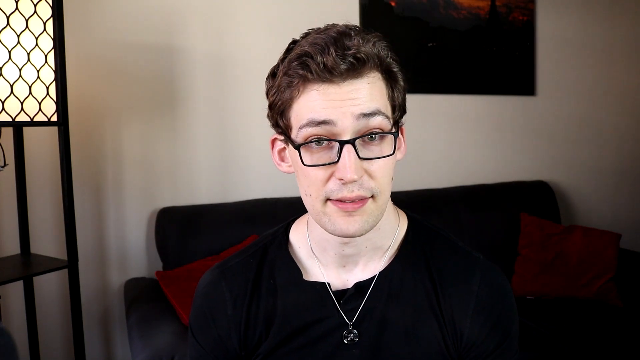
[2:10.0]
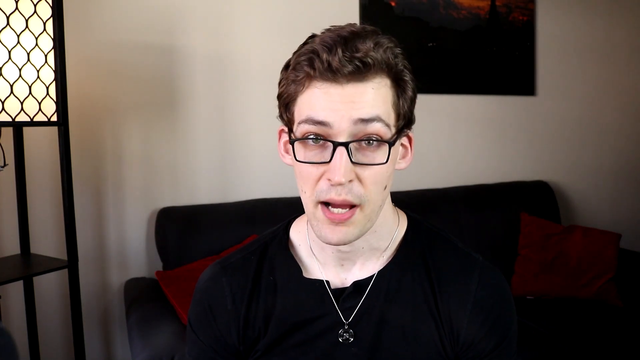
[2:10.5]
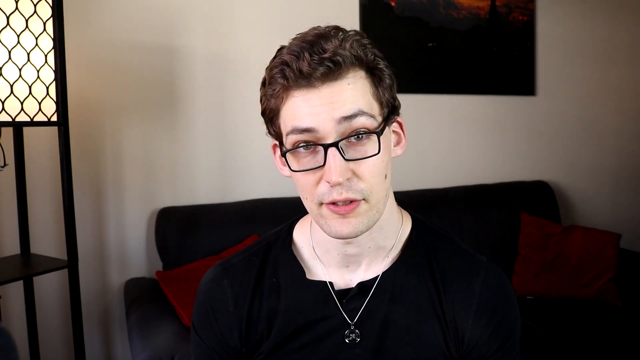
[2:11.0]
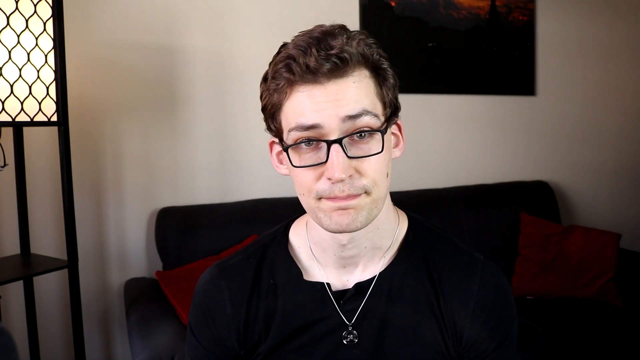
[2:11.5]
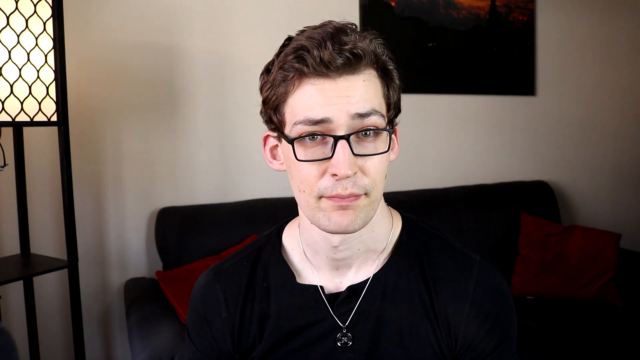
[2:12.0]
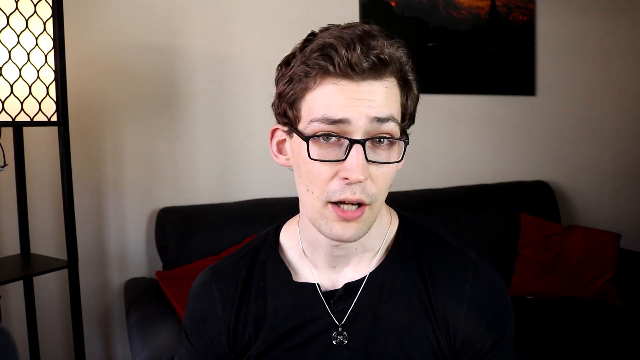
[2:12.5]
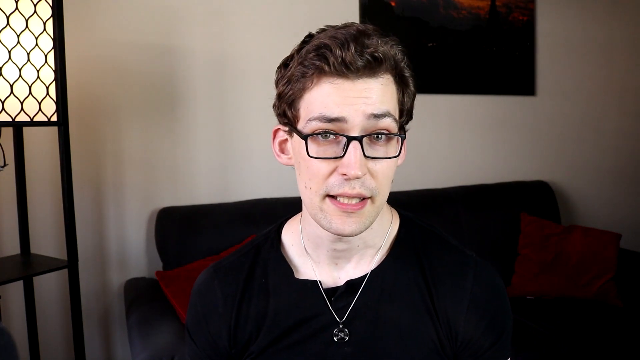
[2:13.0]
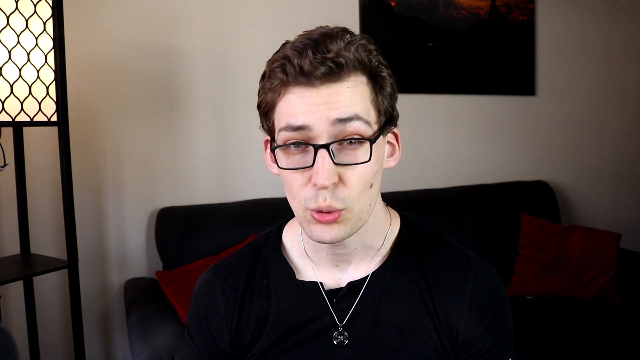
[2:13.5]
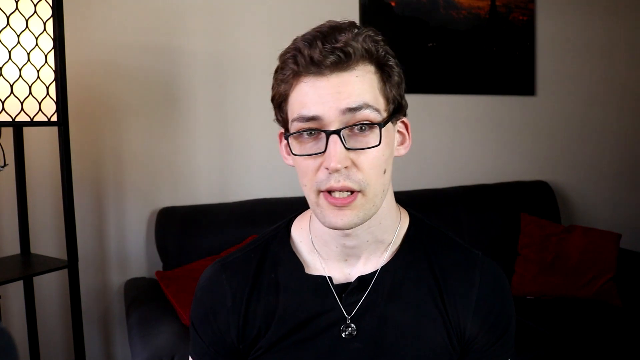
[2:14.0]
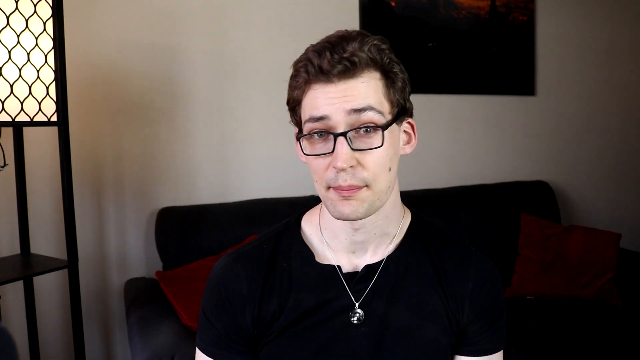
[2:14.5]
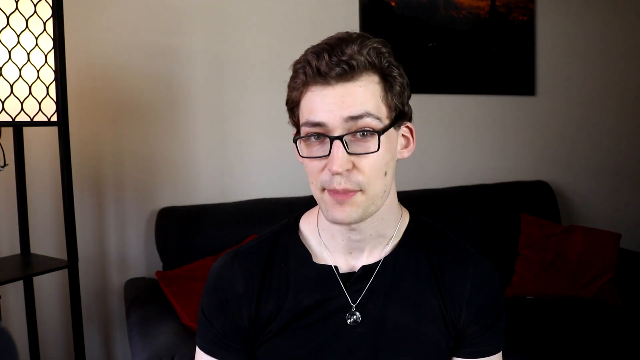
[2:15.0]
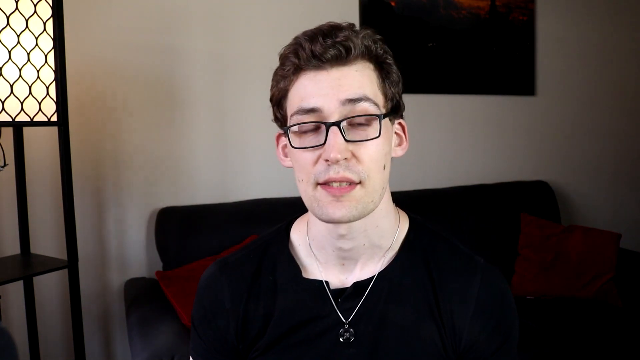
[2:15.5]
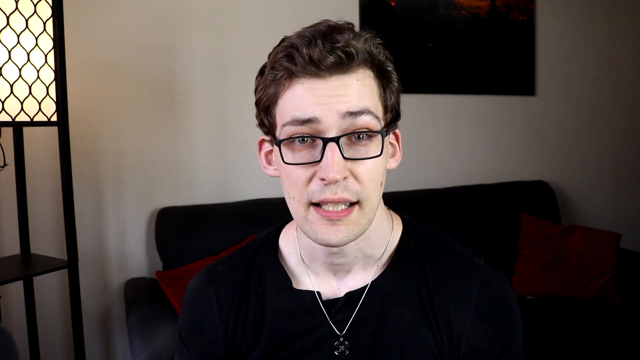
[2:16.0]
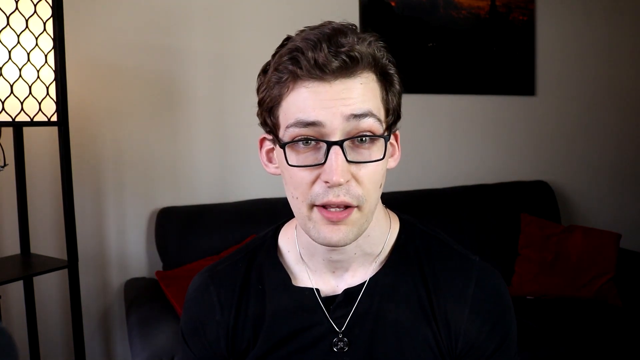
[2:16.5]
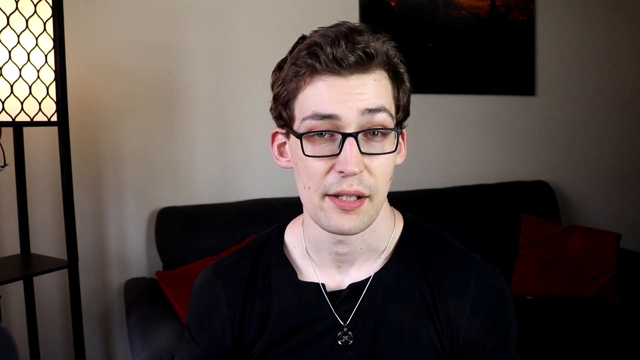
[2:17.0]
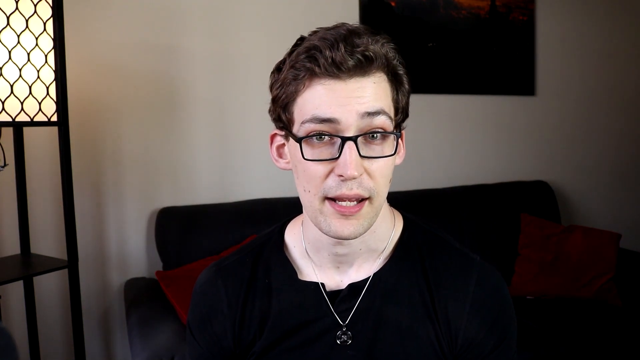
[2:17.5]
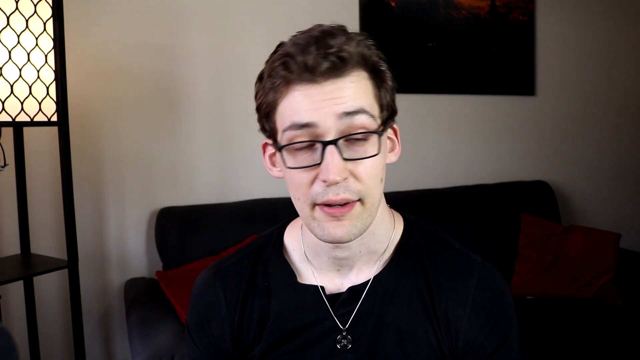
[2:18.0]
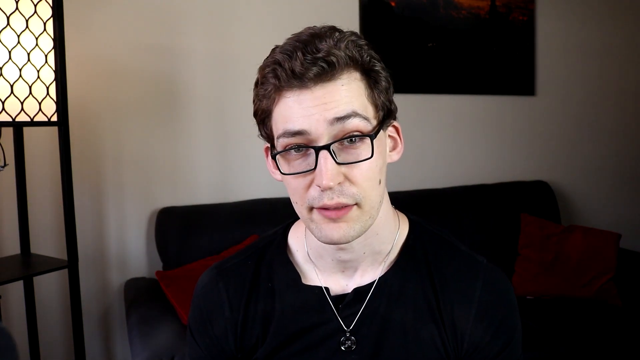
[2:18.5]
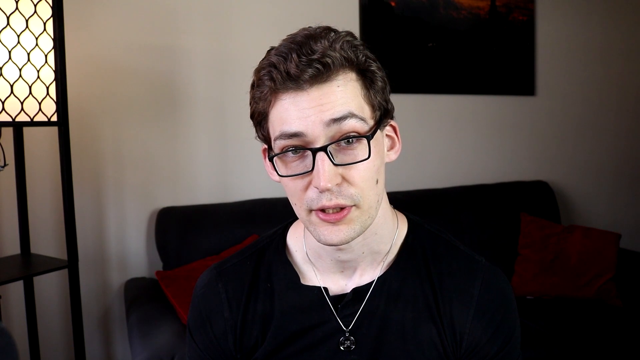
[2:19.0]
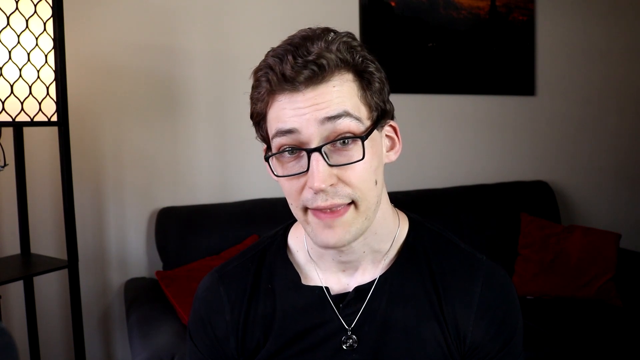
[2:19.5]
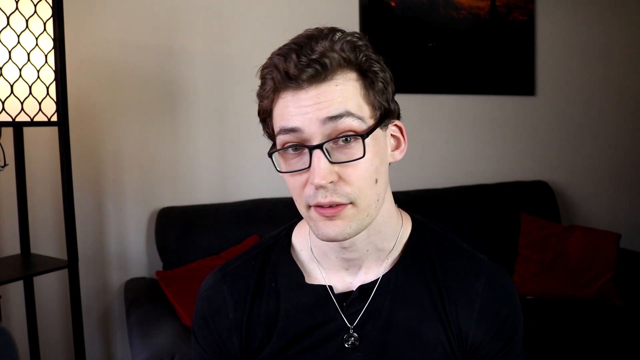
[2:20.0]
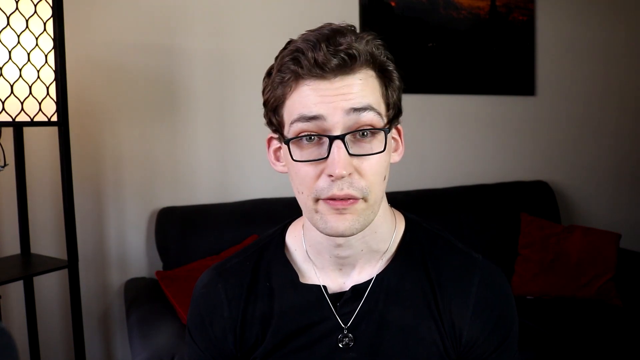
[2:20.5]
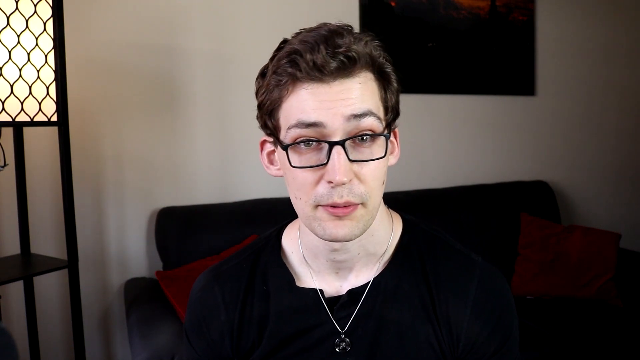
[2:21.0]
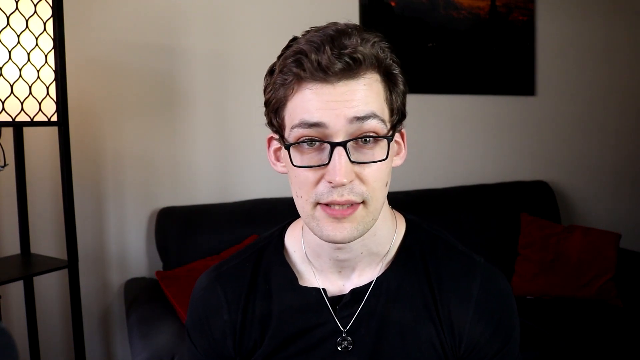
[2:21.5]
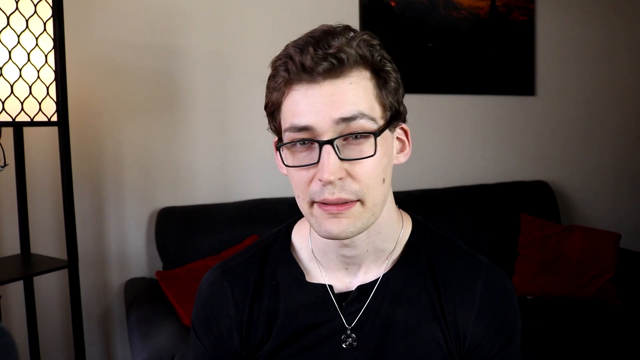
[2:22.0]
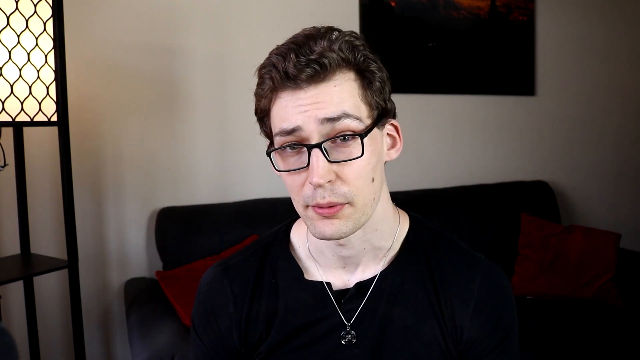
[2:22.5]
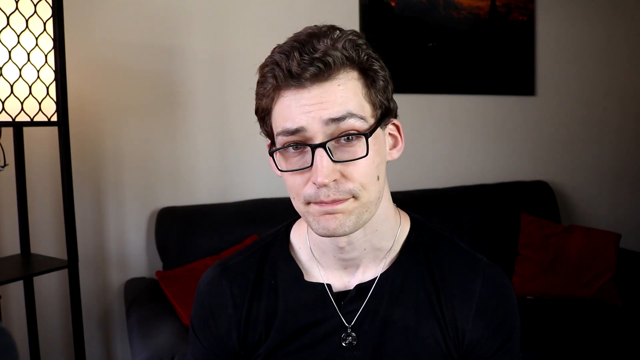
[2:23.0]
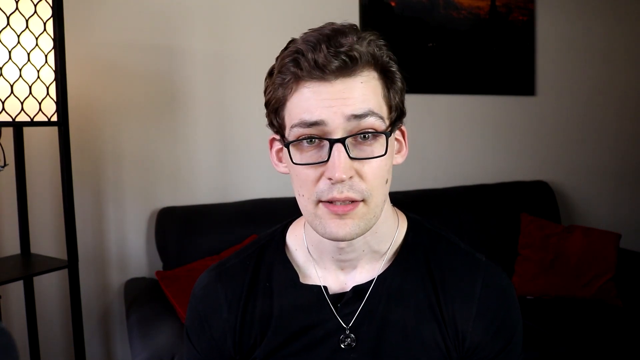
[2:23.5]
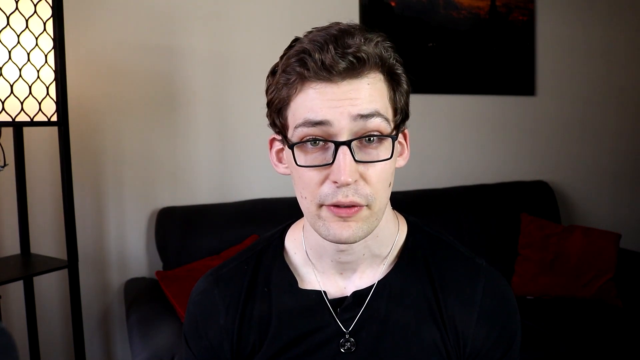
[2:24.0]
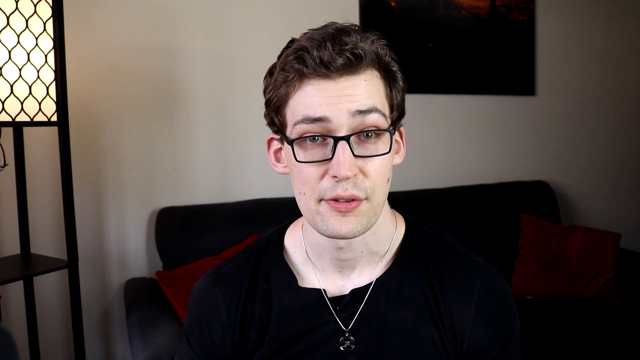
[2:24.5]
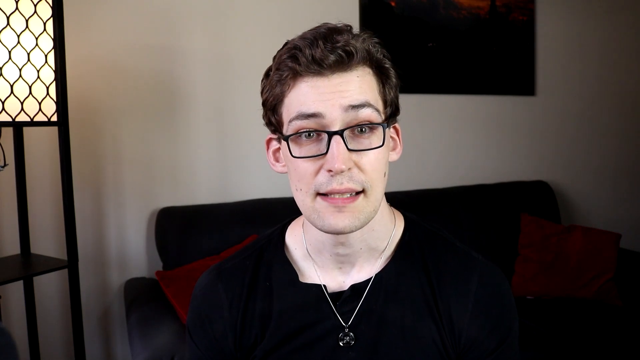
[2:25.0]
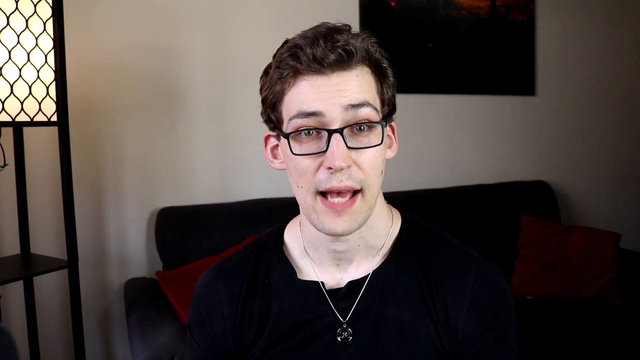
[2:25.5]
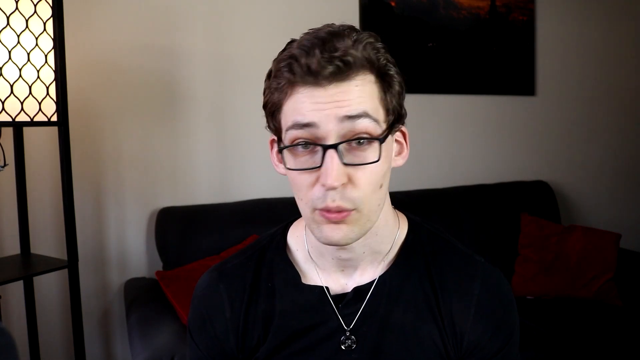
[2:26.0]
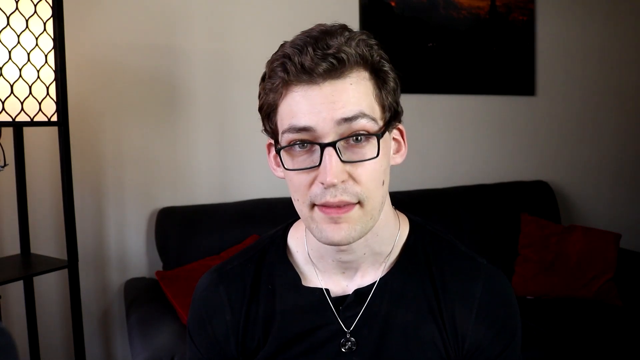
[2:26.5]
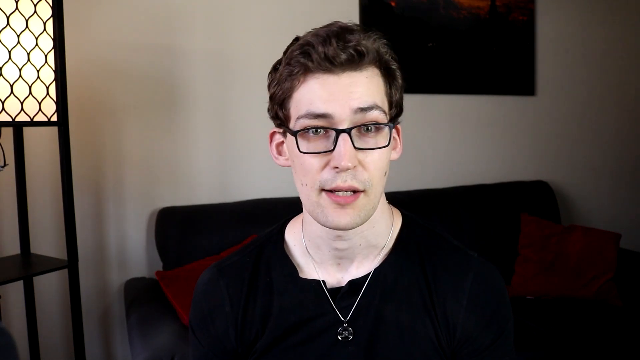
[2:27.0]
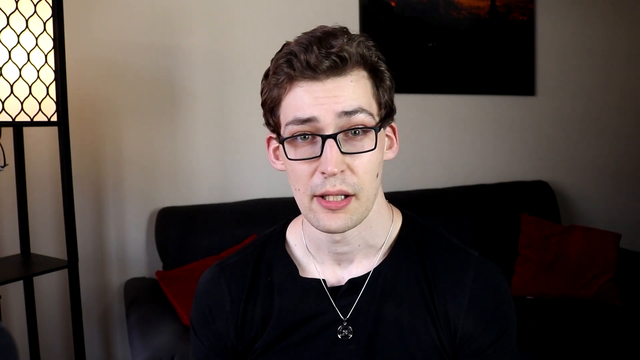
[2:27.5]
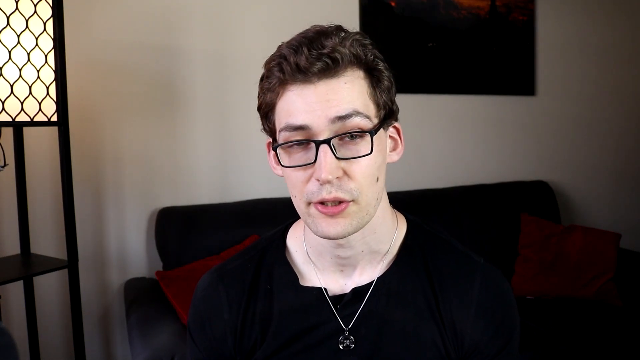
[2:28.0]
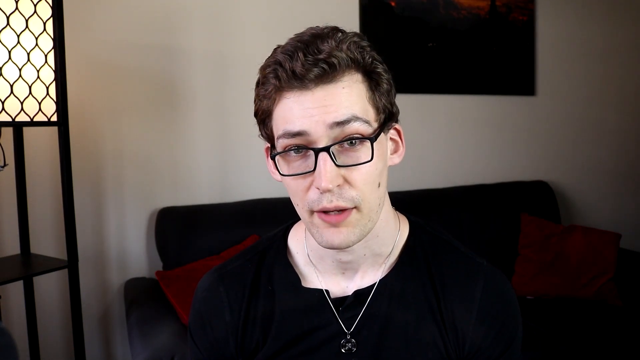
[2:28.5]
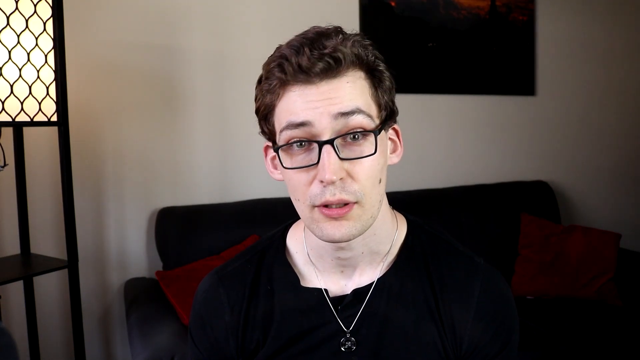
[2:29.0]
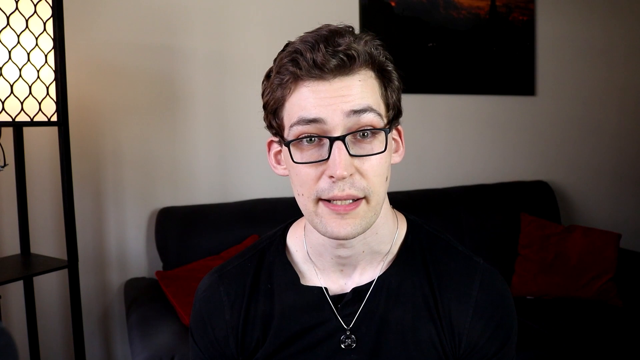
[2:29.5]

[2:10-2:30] Nicholas Verhoeven is back in the same living room setting with the black couch, red pillows, a black painting with a red upper part, a white wall, and a lamp with a black frame and a yellowish glow. While speaking, he seems to rock back and forth a bit.